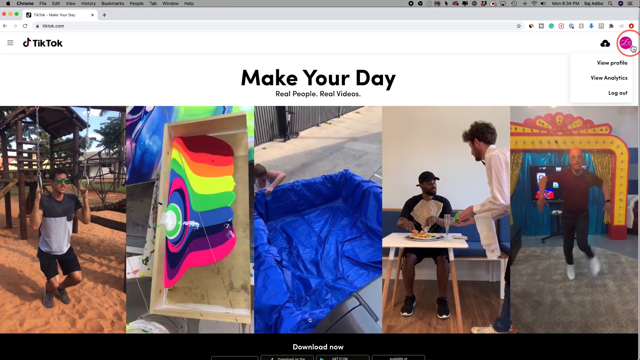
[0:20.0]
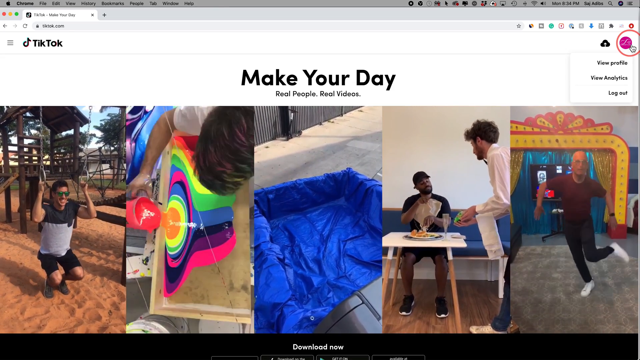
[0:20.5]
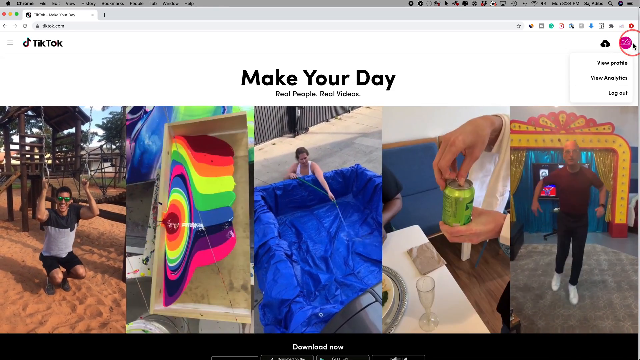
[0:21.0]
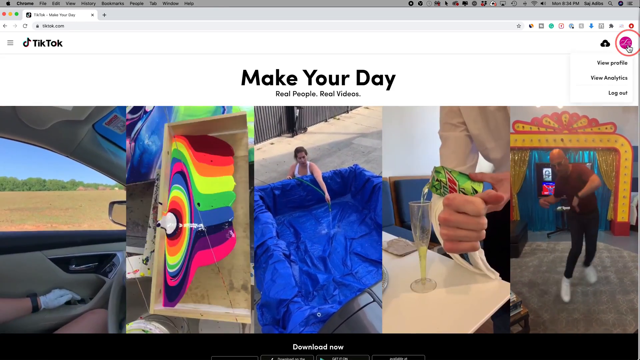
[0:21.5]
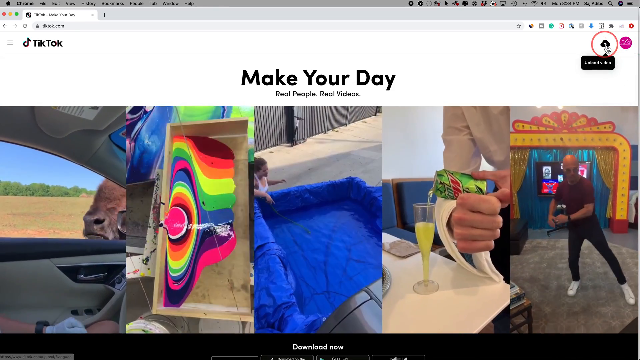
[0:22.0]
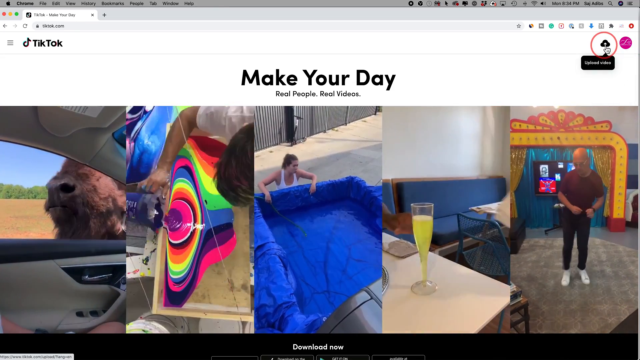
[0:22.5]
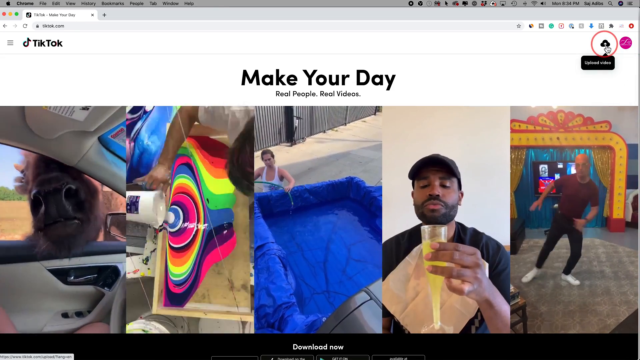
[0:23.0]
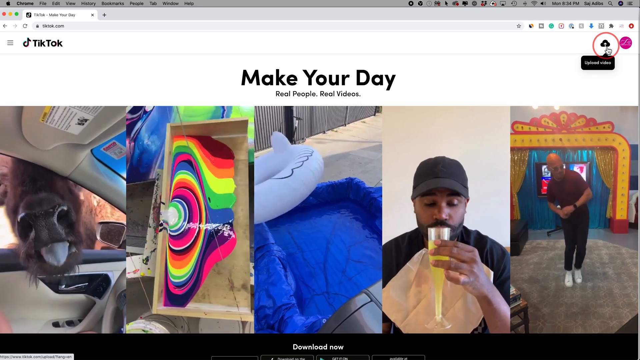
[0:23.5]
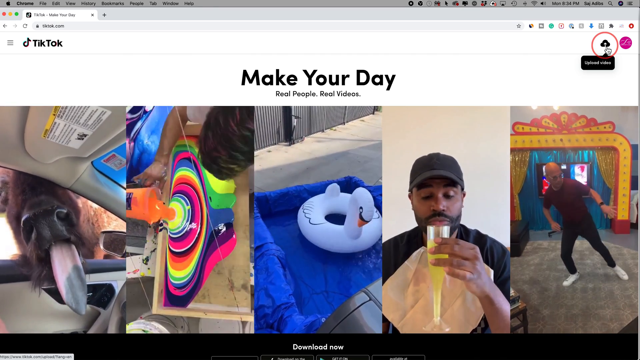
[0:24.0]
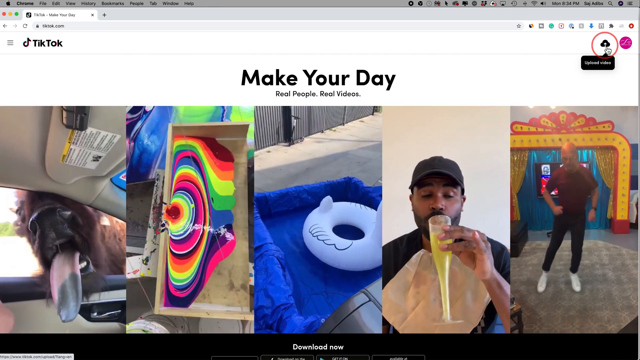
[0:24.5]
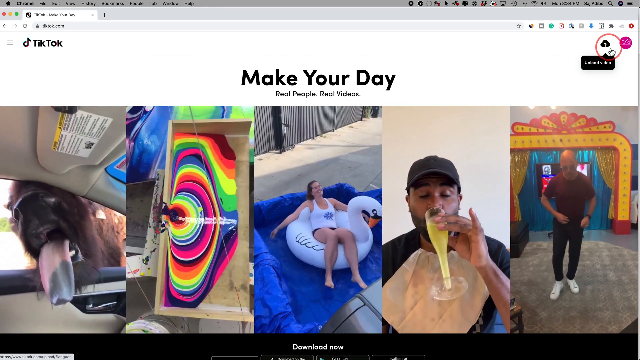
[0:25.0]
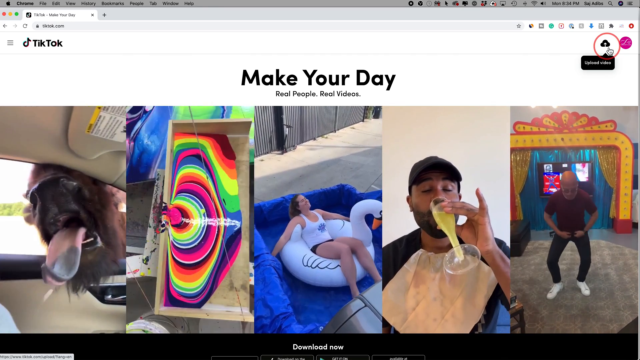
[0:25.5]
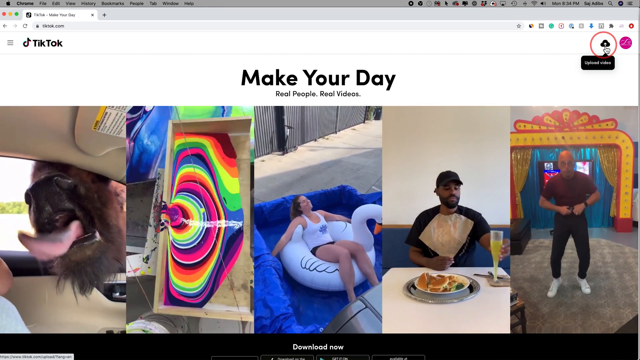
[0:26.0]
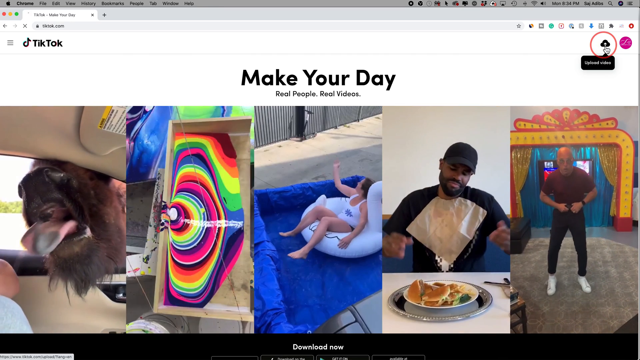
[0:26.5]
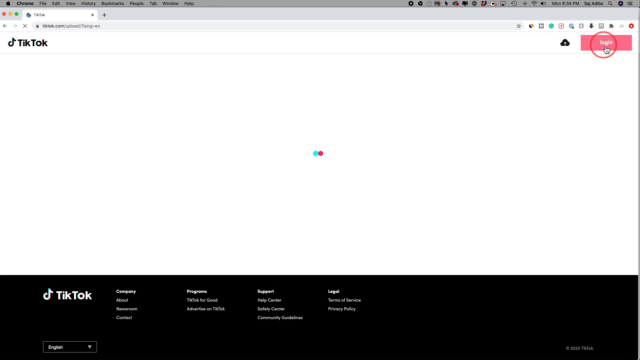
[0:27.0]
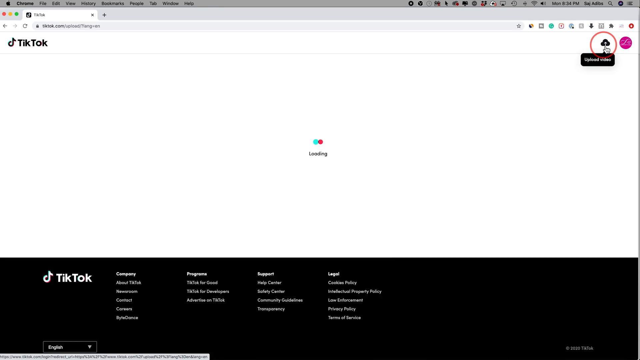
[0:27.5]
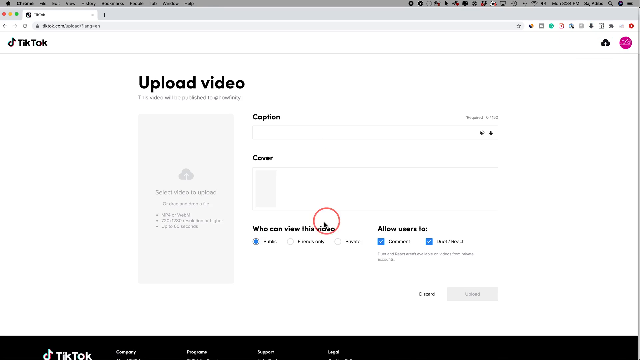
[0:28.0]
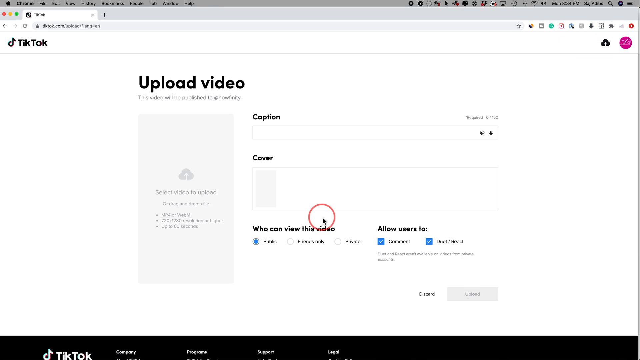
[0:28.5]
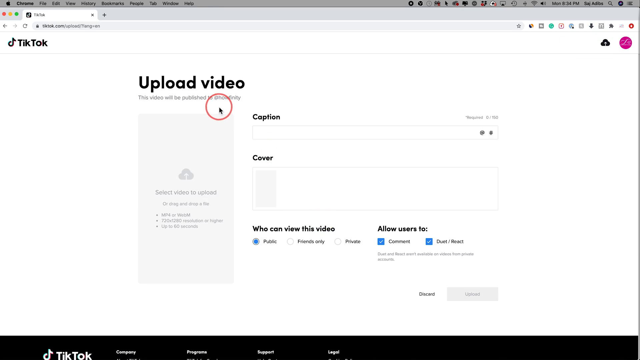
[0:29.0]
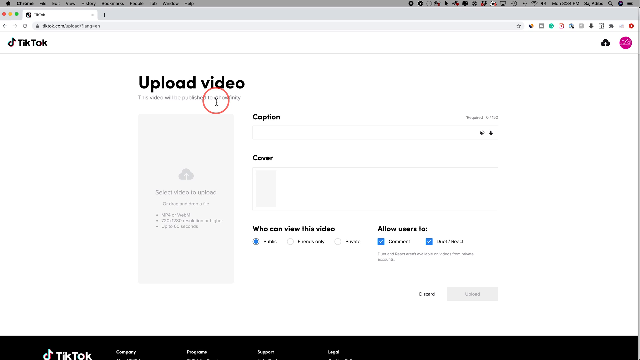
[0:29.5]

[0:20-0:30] On the same TikTok home page, the video of the man doing pull-ups ends and cuts to the inside of a car, where some kind of bison puts its snout into the window and sticks out its tongue, which flops around. Next to it, people are still rapidly pouring fluorescent paint color by color, making a ripple-like pattern on the canvas or frame. In the video beside the paint video, the woman finishes tucking the tarp into the box, puts an inflatable swan in it, sits inside the swan and floats around a bit in the water-filled box, then reaches up. In the next video, the waiter comes back to the black man, who is enjoying his meal, puts down a glass, opens a can of Mountain Dew and pours it into the glass; the black man sniffs the Mountain Dew as if it were a glass of wine, takes a small sip, puts it down and shrugs. In the last video, the old man is still dancing, changing his dance a little: he sticks out his leg left and right and does another squat. The cursor then moves up to what appears to be a cloud icon, circled by a red circle, and hovering over it brings up a black box with the text "upload video." The cloud icon is clicked, leading to a TikTok page that says "upload video" in black bold text, with text beginning "the video will be published to" below it. Under that is a gray square with instructions on how to upload the video, what to select and what the video's parameters should be. Next to the gray square, at the top, is the word "caption" with a blank text field; to the right of the word it says the field is required, with a 150-character limit. Under the caption field is "cover" in black bold text, with a larger white text box that has a gray rectangle on its left side. Below are options for who can view the video: public, which is selected by default, friends only, and private. To the right are options for what users are allowed to do, checked by default: comment and duet/react. Below that is some text that cannot be read, and at the bottom are discard and upload options.